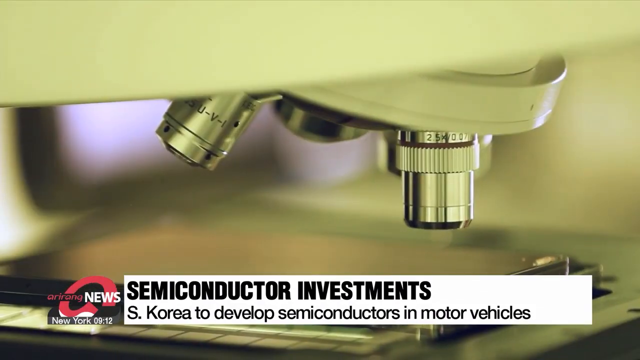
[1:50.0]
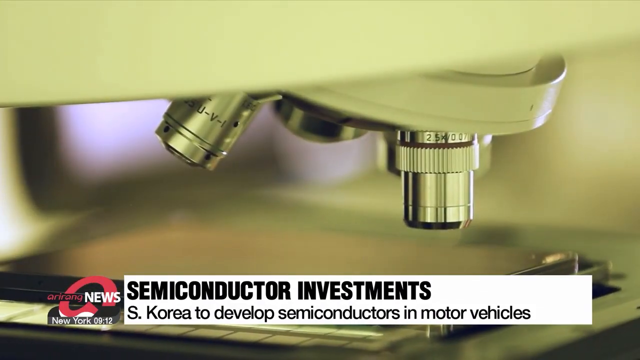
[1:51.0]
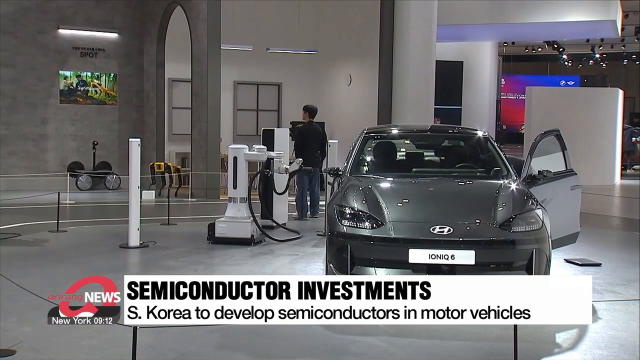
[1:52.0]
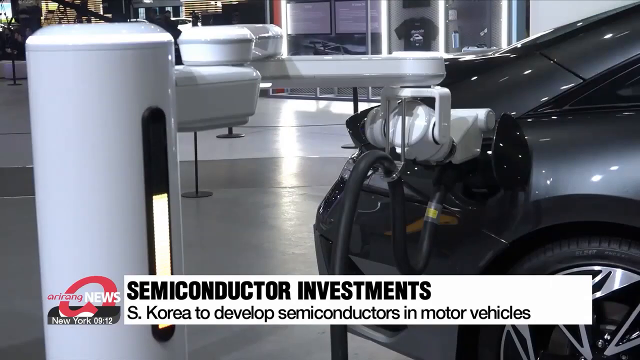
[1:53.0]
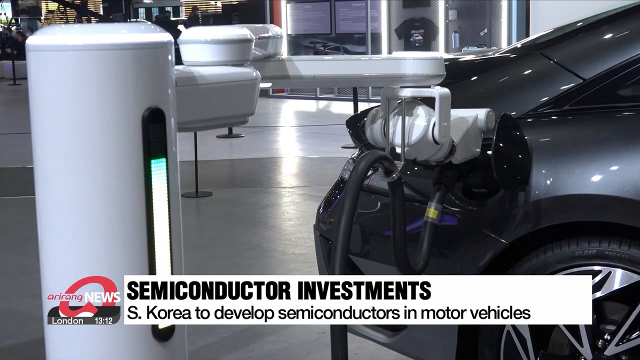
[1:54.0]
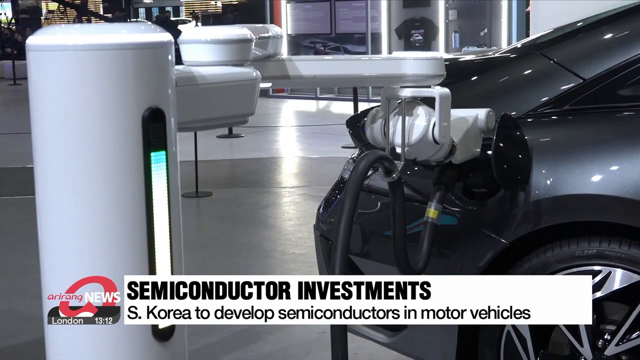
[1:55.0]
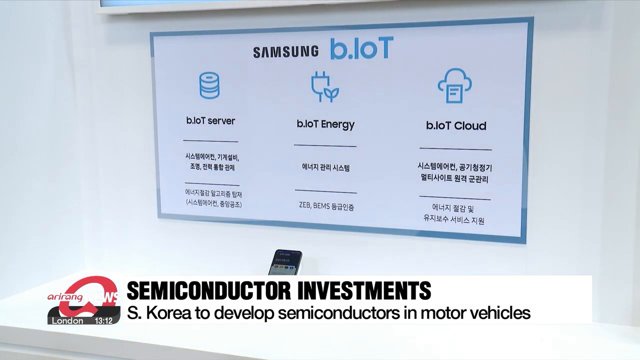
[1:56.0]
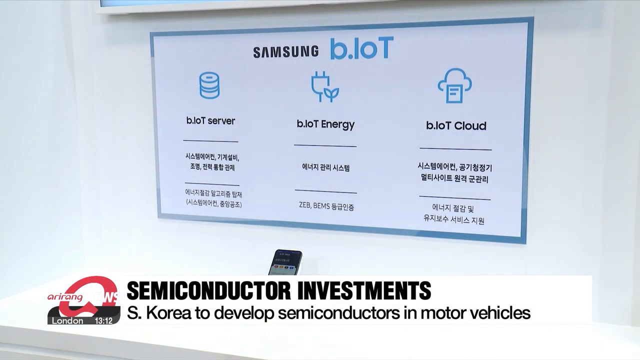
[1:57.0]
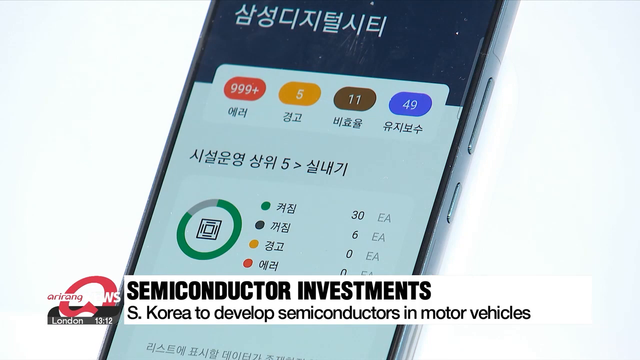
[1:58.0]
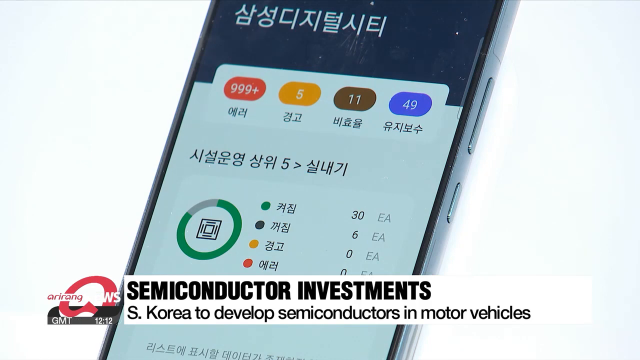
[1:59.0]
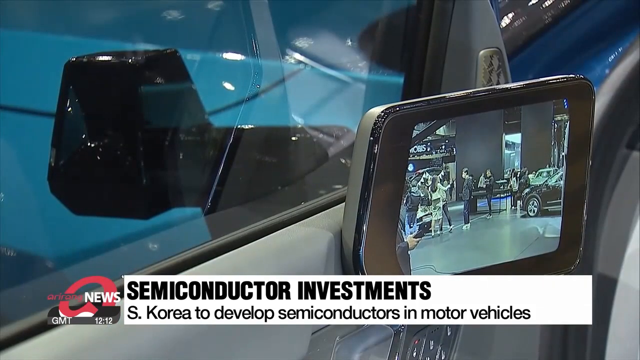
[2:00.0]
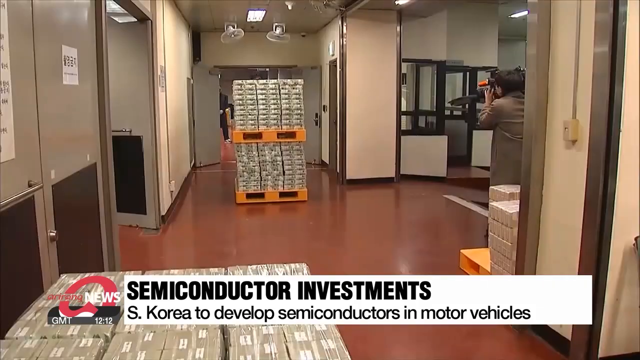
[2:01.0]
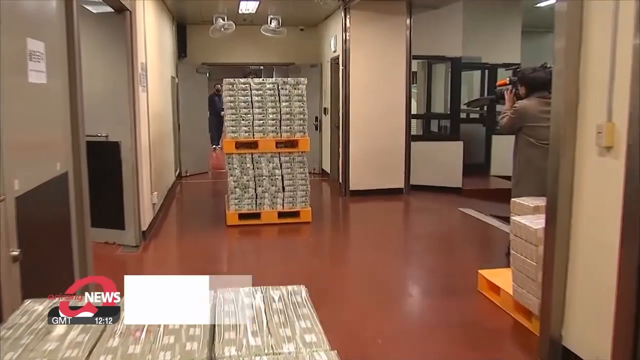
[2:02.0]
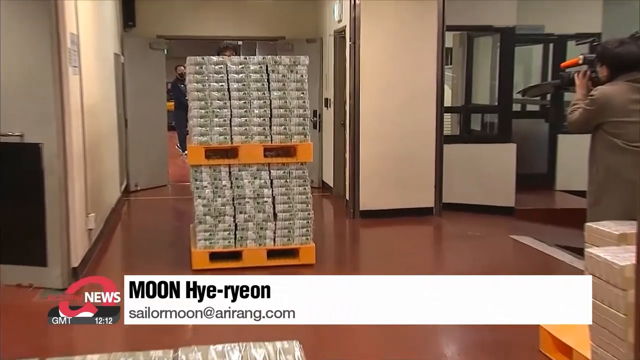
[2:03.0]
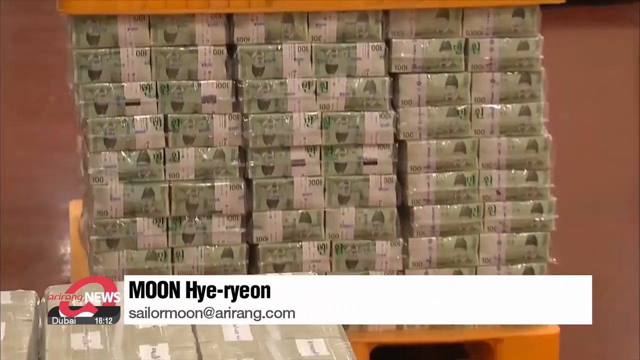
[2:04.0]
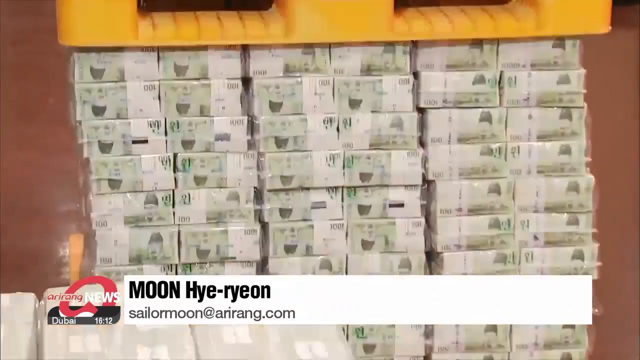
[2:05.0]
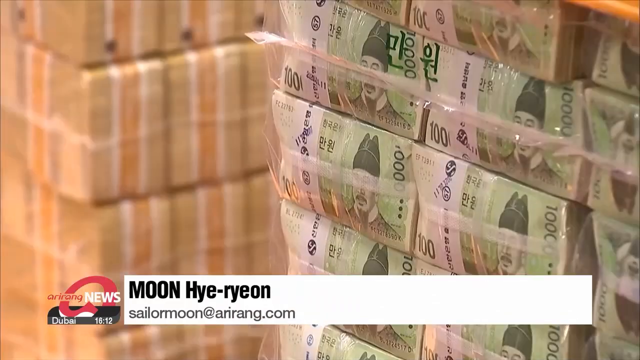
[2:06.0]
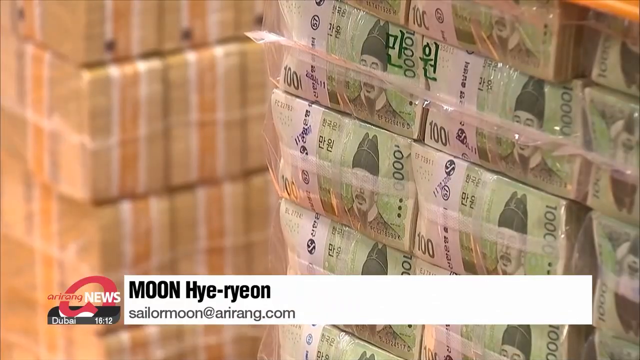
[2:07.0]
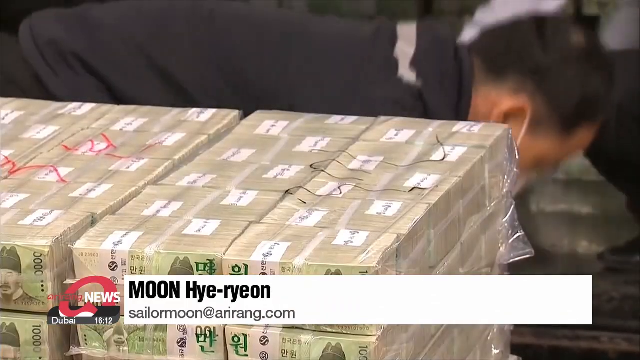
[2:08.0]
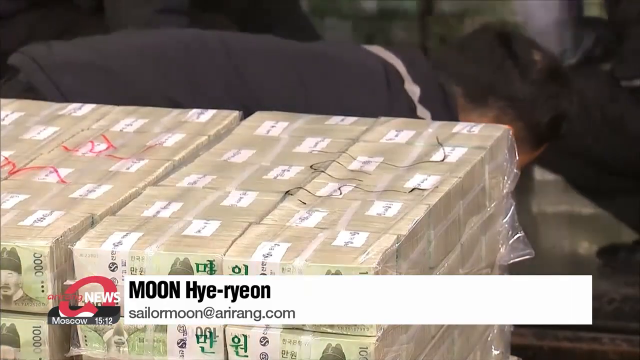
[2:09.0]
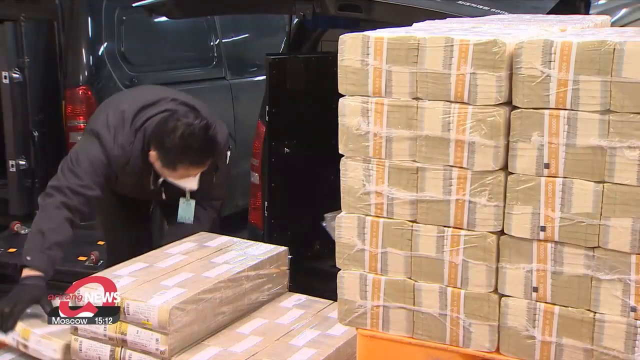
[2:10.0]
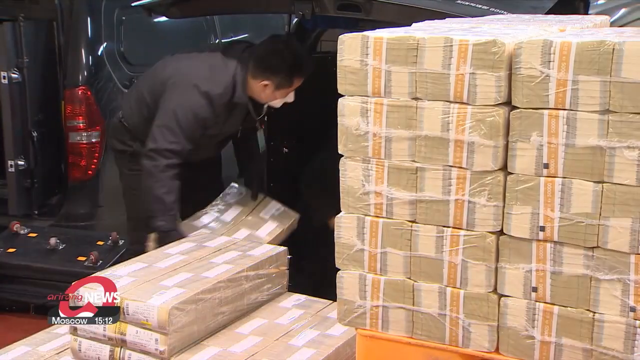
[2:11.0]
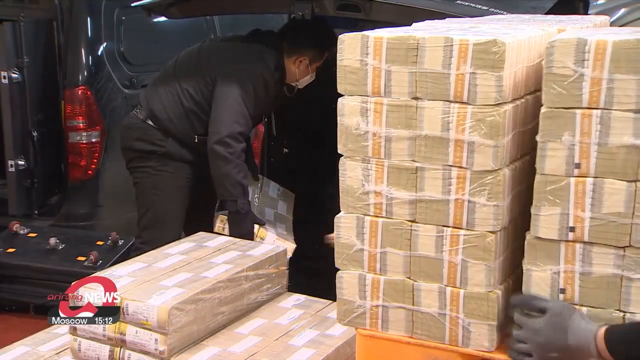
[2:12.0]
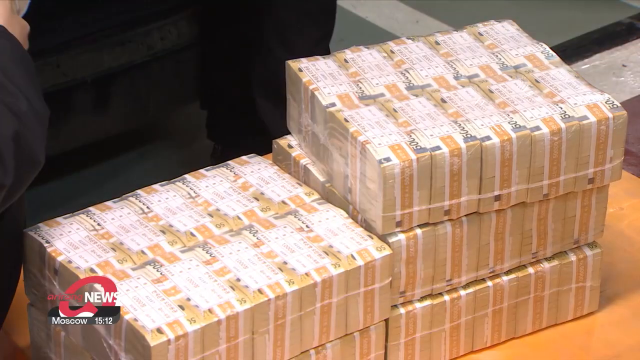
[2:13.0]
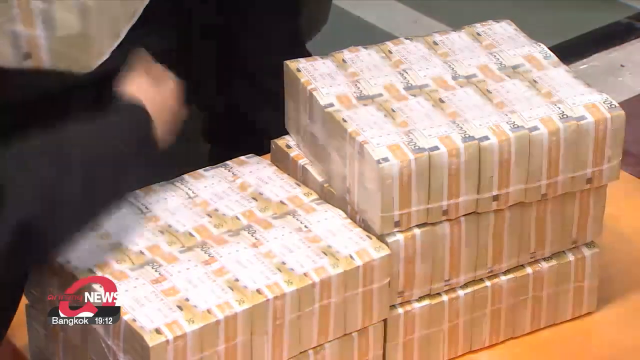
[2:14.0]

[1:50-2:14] A close-up shows the lenses of the microscope. The scene moves to a showcase space for a Hyundai car, with "Hyundai" displayed; the car is a Hyundai IONIQ 6. Two robot-looking figures are next to the car and a person is standing back there. Nothing is moving, but one robot has a sensor that is filling up a bar on it. A wall reads "Samsung B.L.O.T.," along with "B.L.O.T. server," "B.L.O.T. energy" and "B.L.O.T. cloud" with Korean underneath. A phone screen shows data and charts in Korean. Then there appears to be a screen in the car showing what is behind it, almost like a passenger-side mirror but using a camera. Someone pushes pallets loaded with what looks like Korean money while people take pictures of it, in what looks like a very official process.